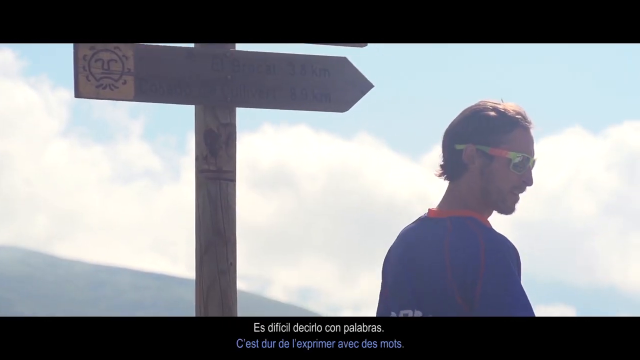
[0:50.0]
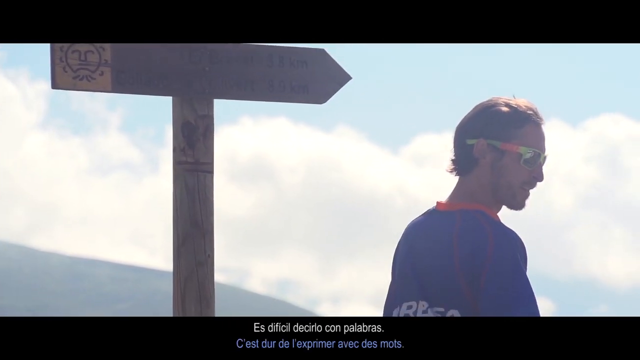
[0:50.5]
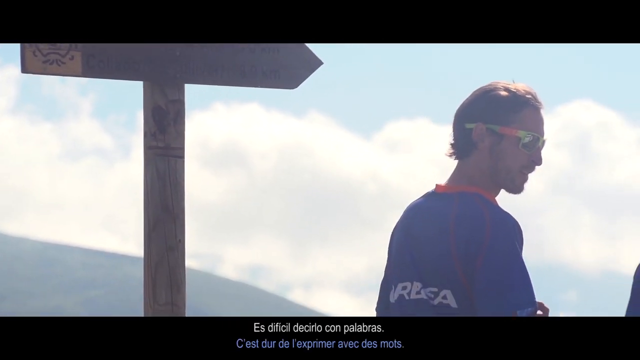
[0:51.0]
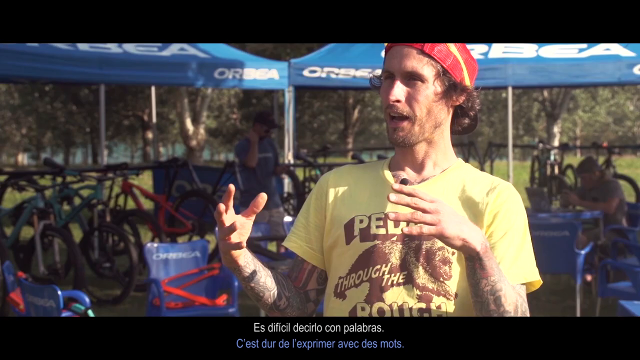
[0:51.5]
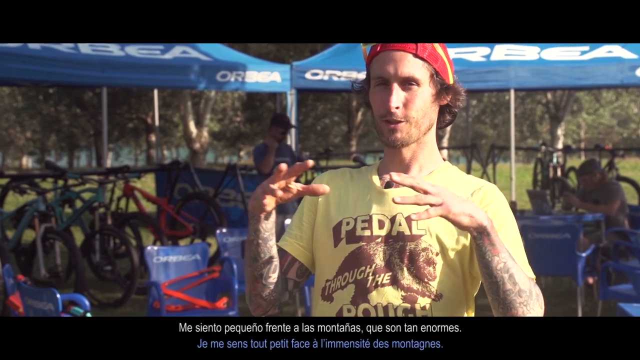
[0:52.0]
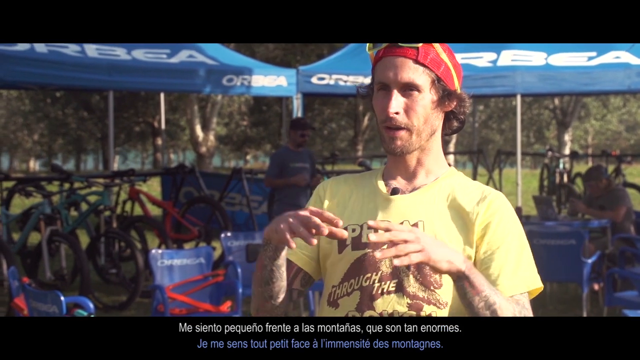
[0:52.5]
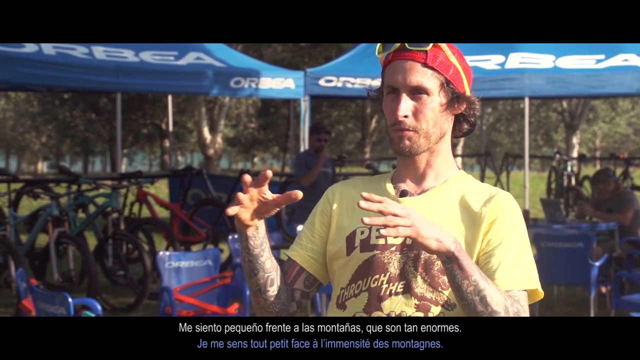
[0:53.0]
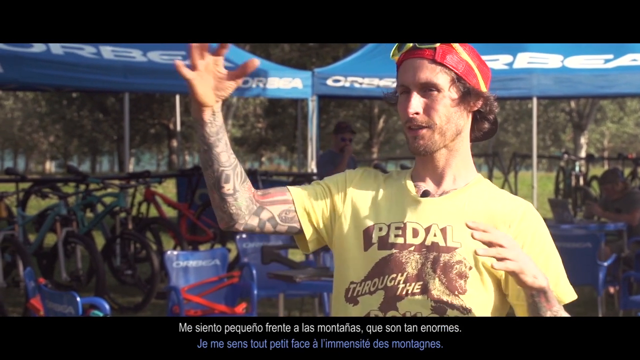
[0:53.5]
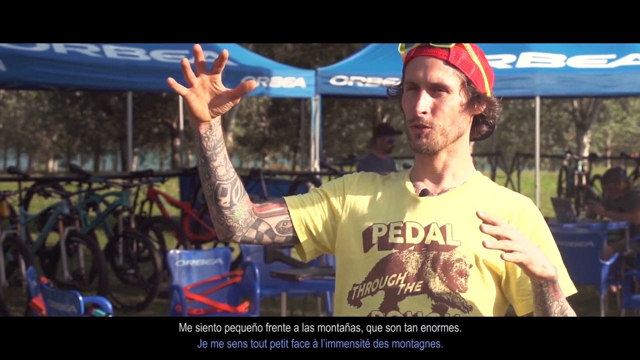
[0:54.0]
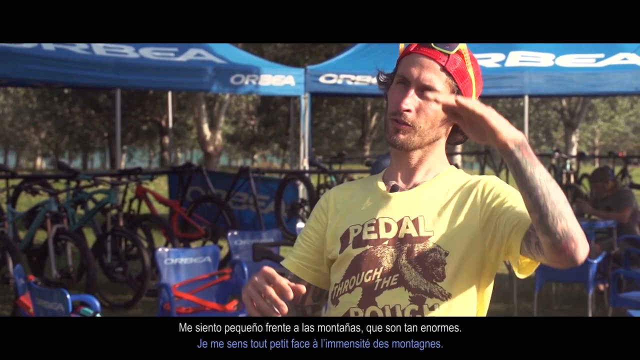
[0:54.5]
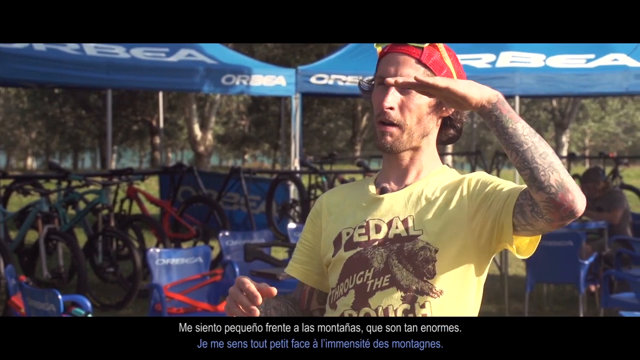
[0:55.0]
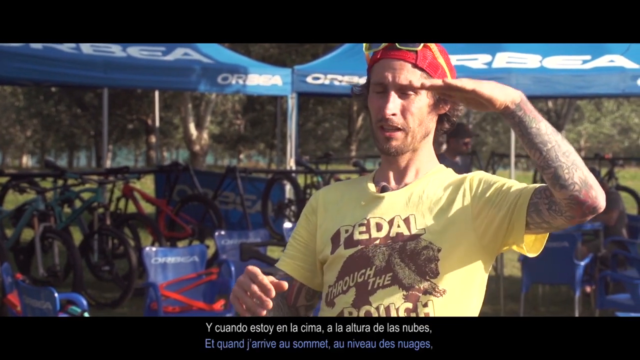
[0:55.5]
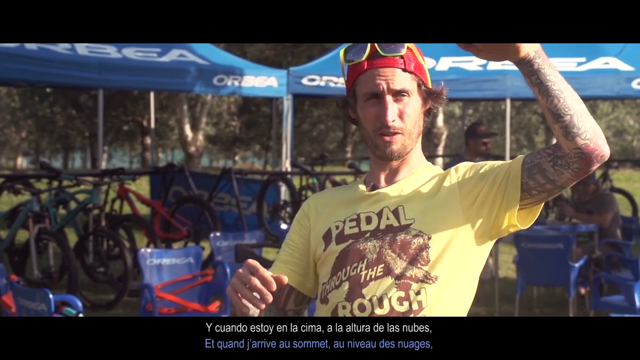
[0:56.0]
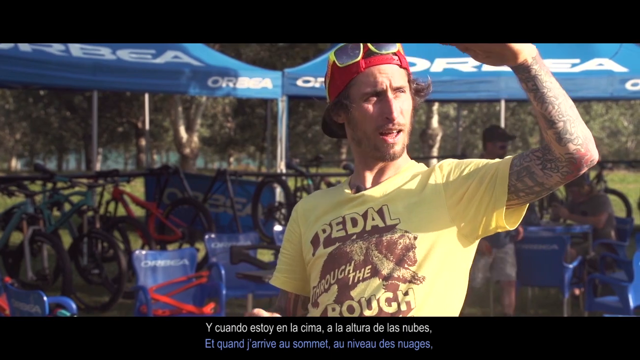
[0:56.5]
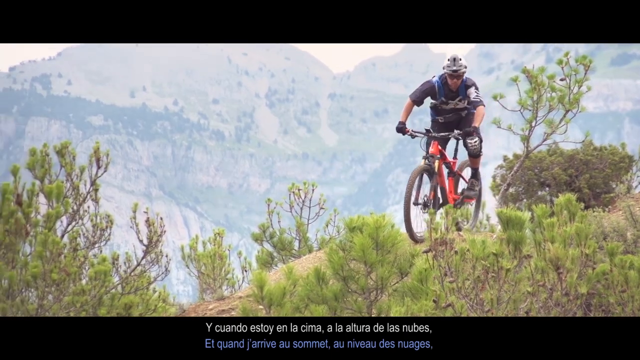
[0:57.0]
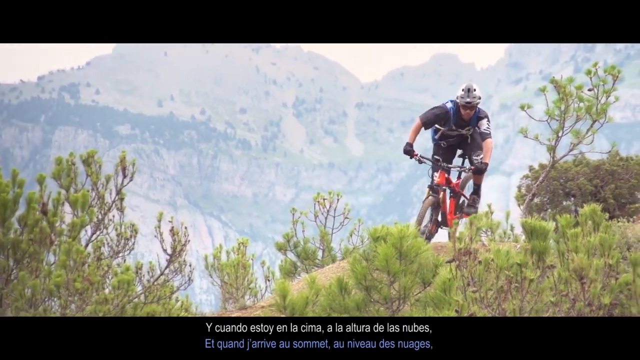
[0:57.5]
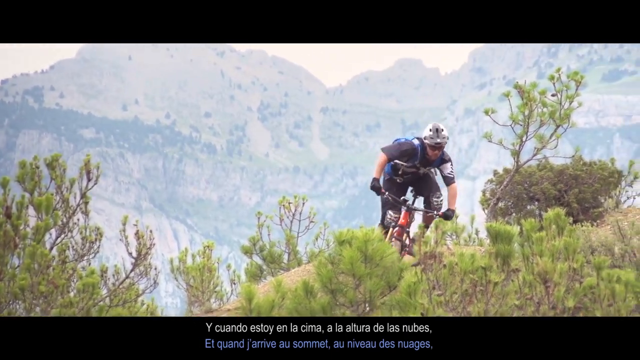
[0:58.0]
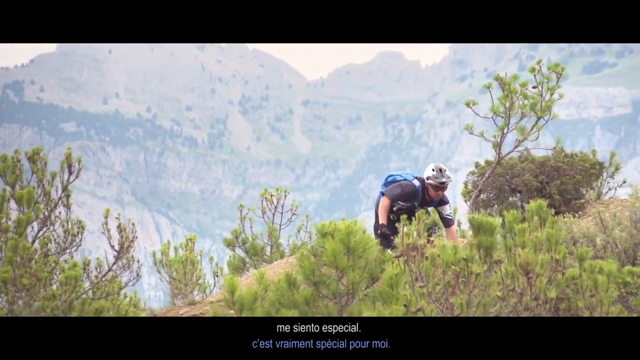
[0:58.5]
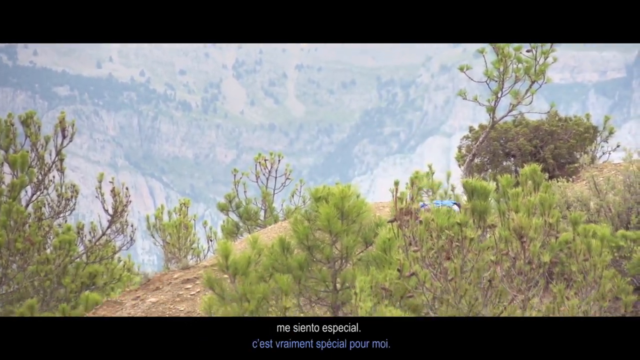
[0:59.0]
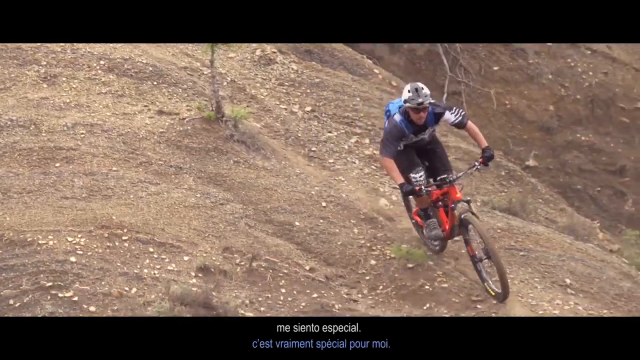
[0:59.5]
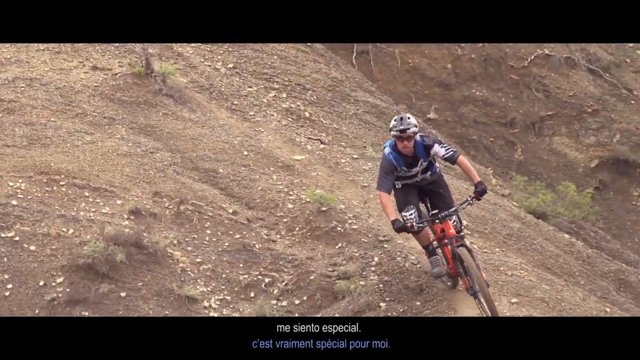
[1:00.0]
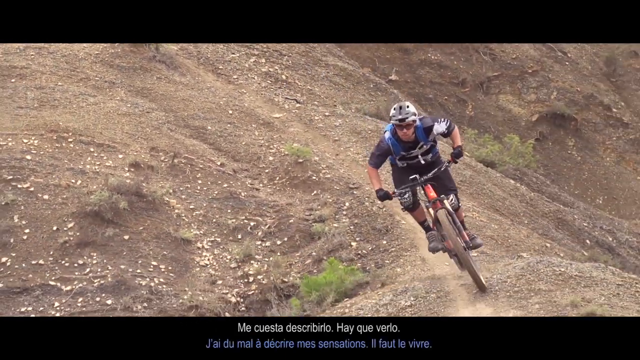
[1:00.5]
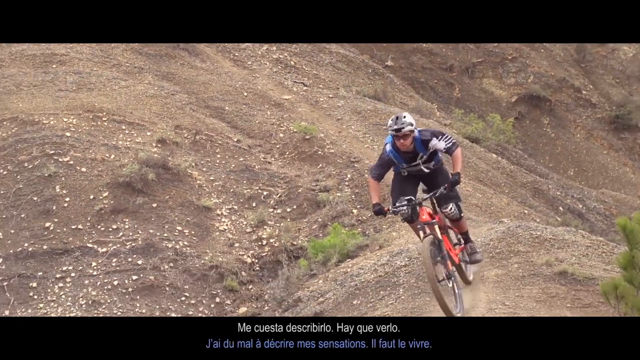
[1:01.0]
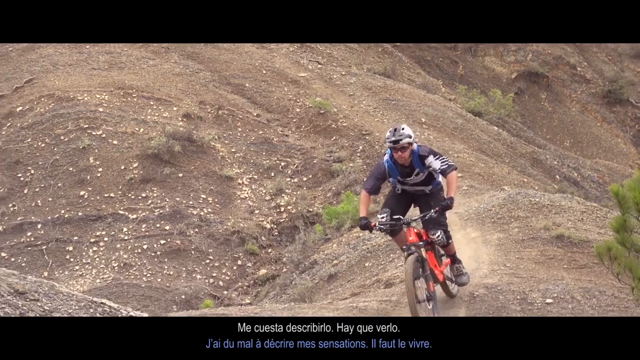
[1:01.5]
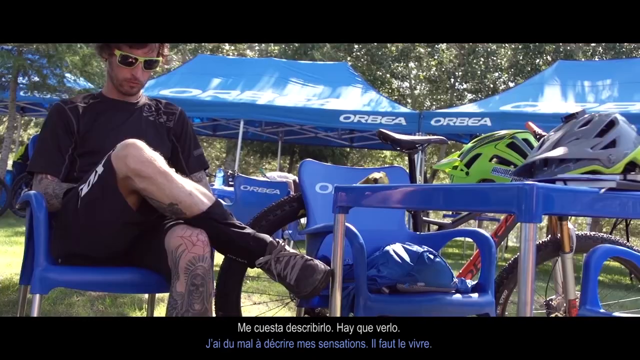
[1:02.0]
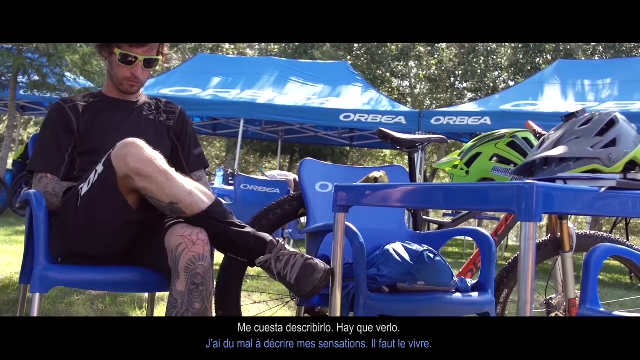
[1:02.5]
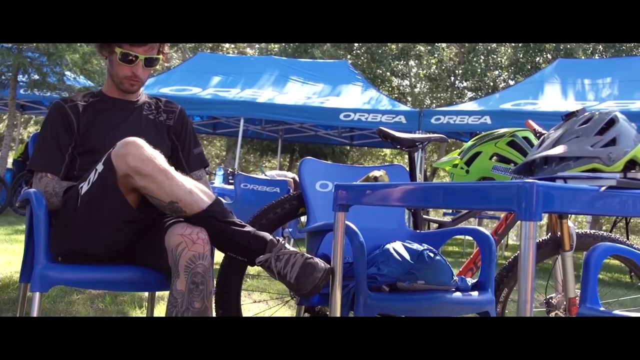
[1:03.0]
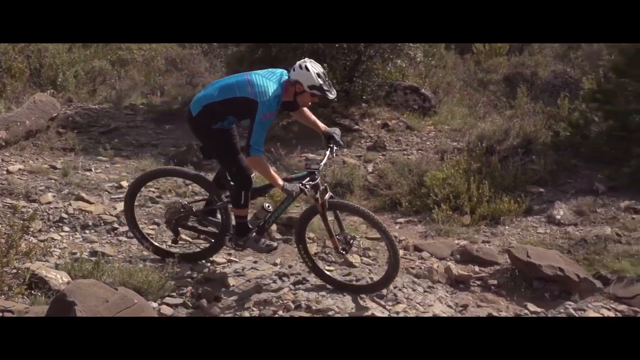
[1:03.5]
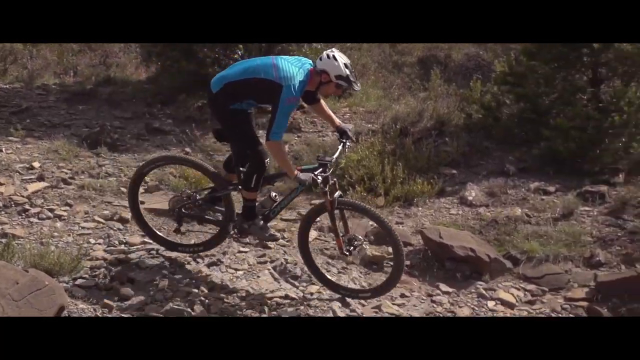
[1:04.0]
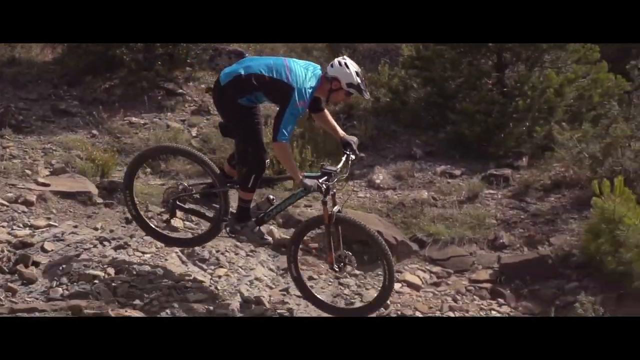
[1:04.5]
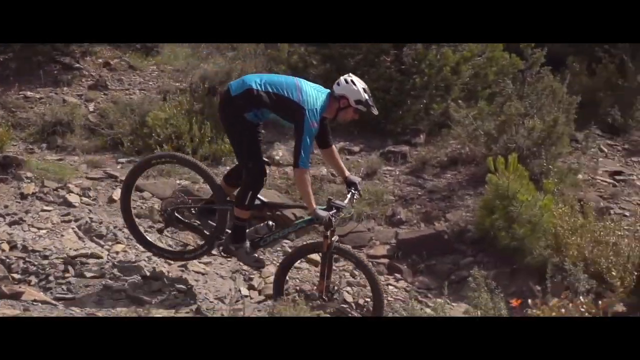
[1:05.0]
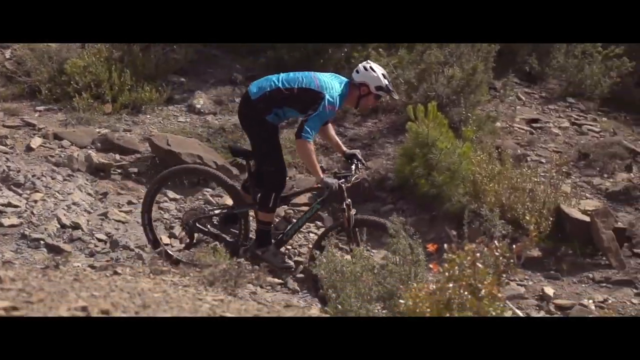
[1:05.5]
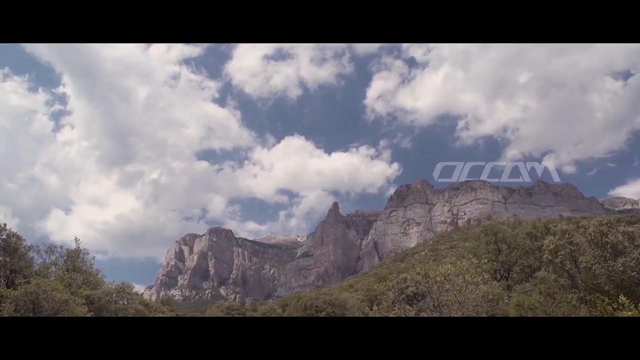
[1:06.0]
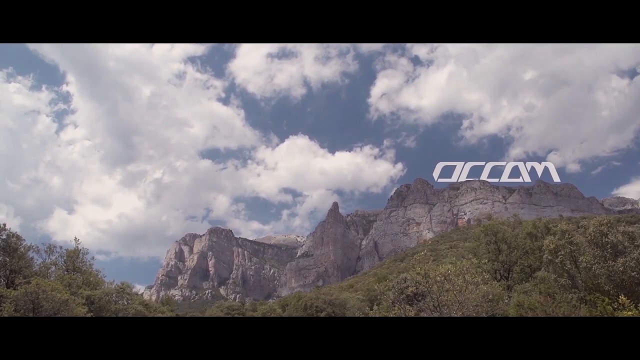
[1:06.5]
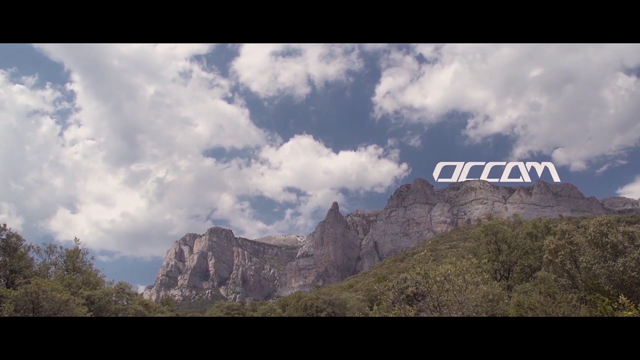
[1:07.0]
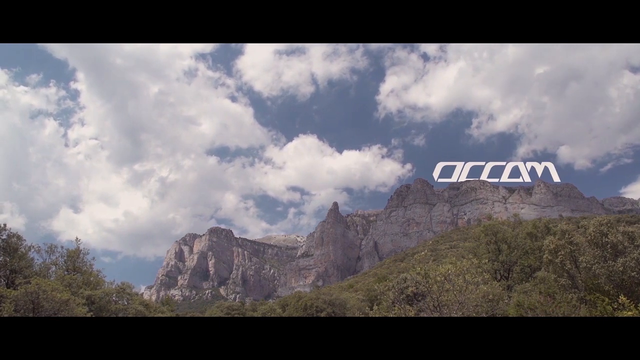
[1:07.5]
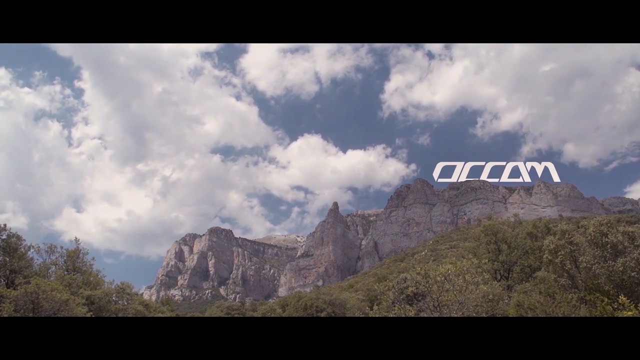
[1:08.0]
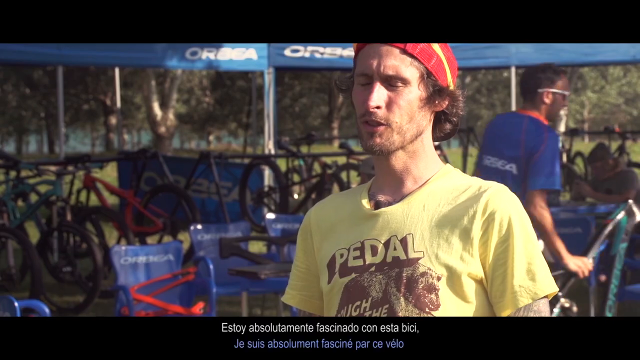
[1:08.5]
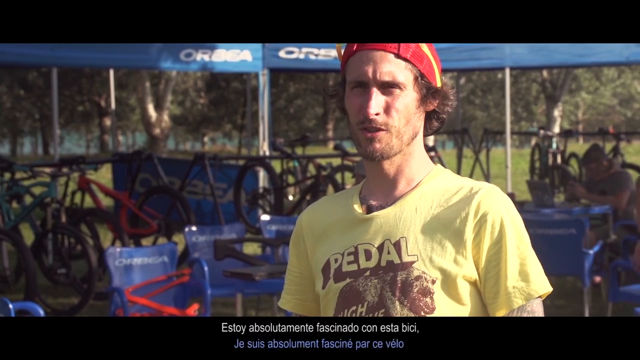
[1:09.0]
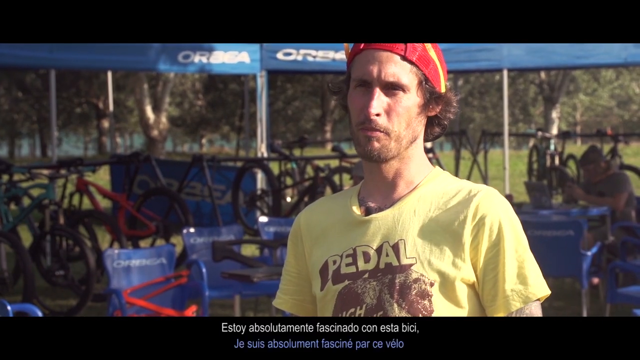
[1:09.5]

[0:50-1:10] A rider is in front of the sign, then the man in the yellow shirt and red hat is talking, with words in a foreign language at the bottom of the screen. More action shots follow: a man on a red bicycle rides down a hill through a very loose soil area with very few rocks, more dirt than anything, braking when he needs to so he doesn't slide off. In a new section, a man wearing sunglasses is sitting at what looks like a blue picnic table, maybe relaxing, and he appears to be reading something. This fades out quickly, and another action shot shows someone on a bike going carefully down a gravelly area. The shot of the mountain range with clouds appears, with text that looks like "OCC am" on top of the mountain range. The man in the yellow jersey continues talking, again with foreign-language words at the bottom. Many of the shots are of nature, with a lot of sun and a lot of loose gravel across the mountain range.